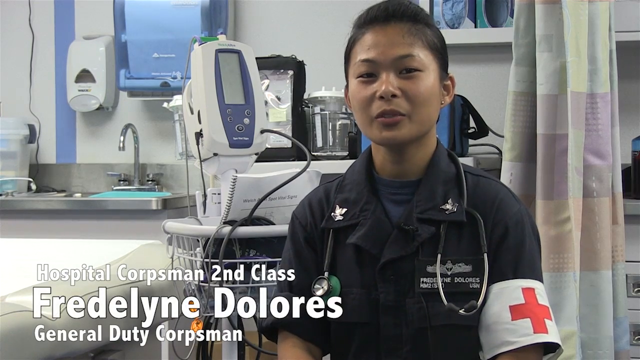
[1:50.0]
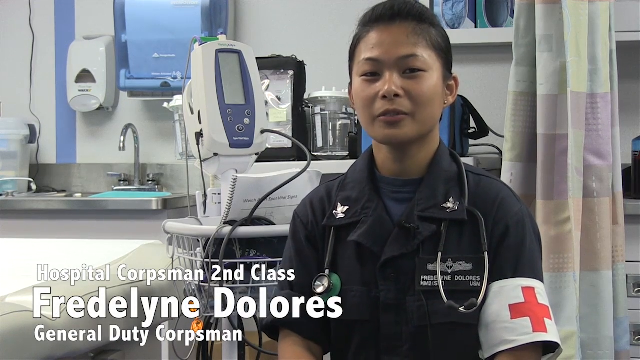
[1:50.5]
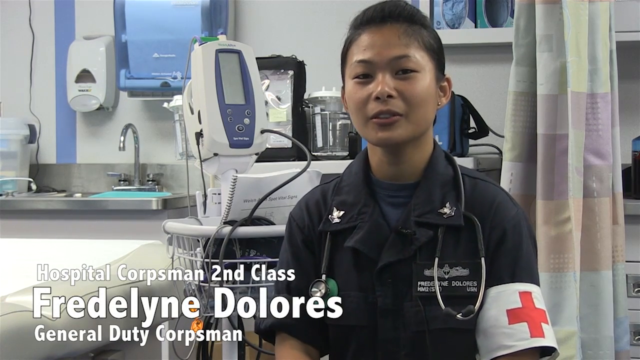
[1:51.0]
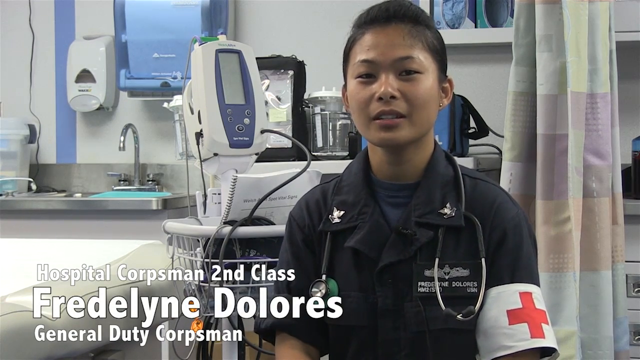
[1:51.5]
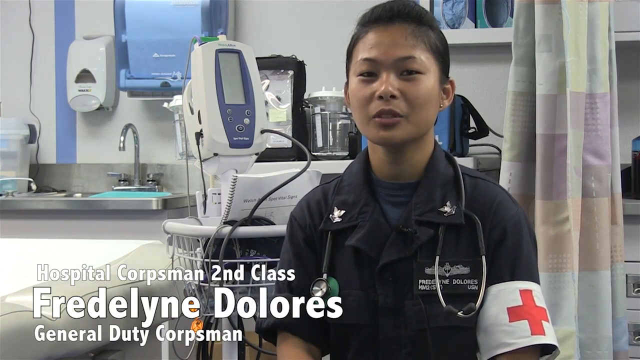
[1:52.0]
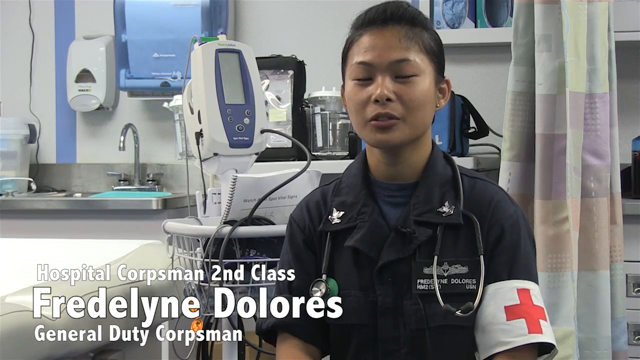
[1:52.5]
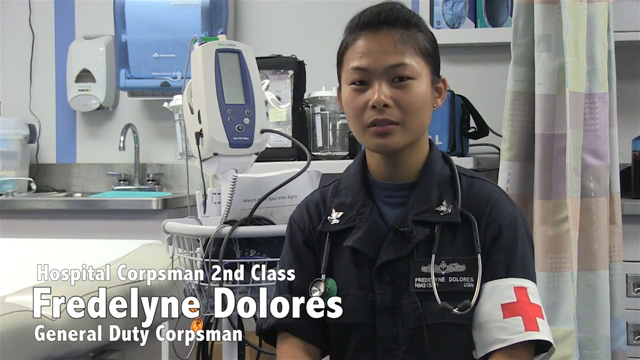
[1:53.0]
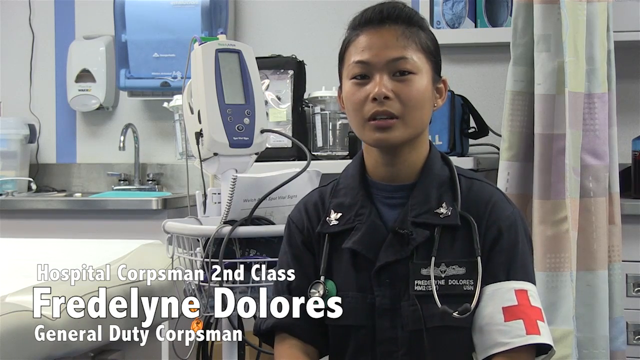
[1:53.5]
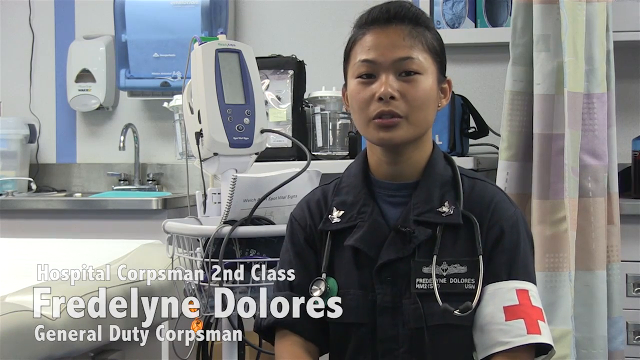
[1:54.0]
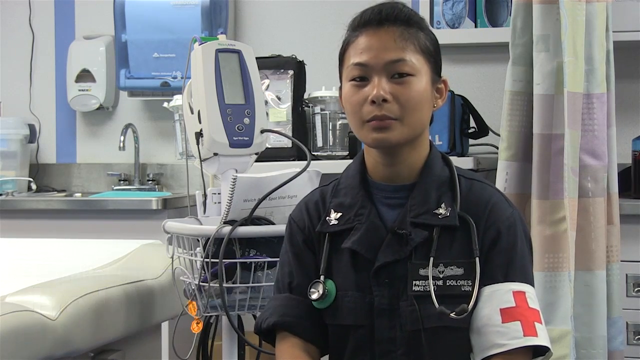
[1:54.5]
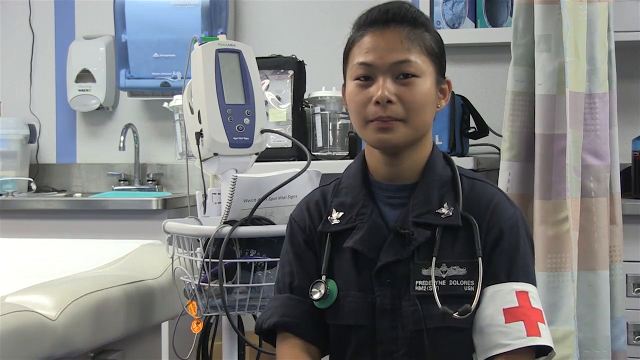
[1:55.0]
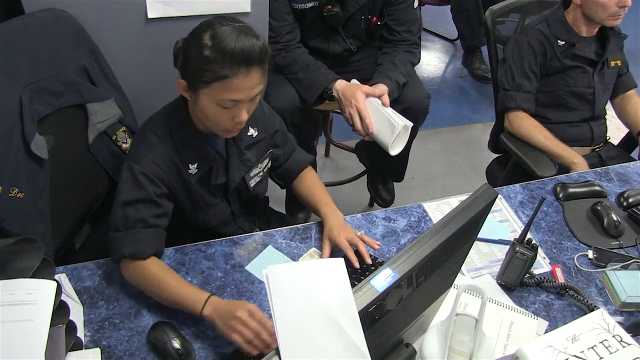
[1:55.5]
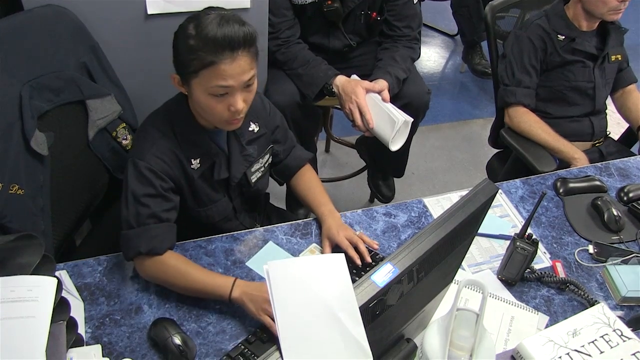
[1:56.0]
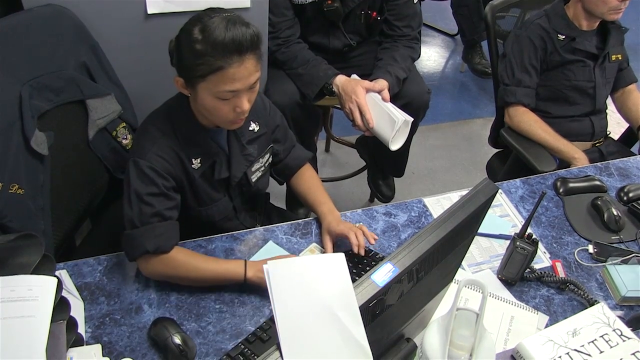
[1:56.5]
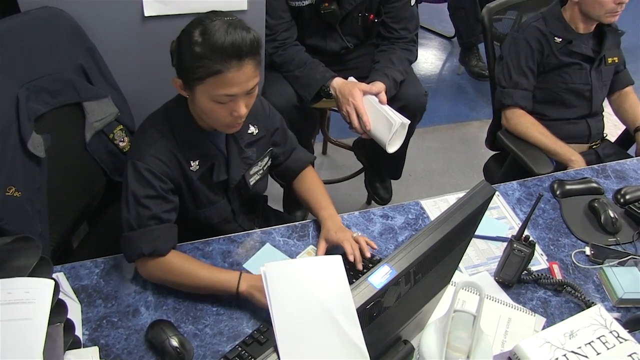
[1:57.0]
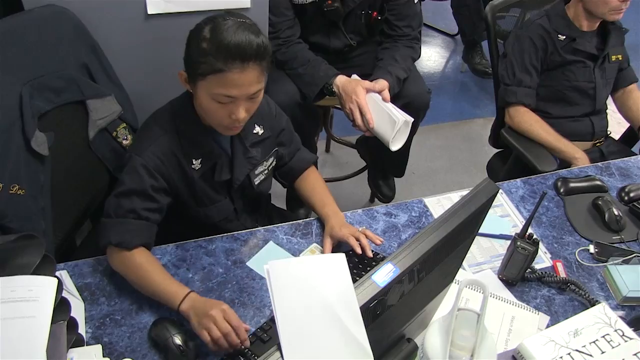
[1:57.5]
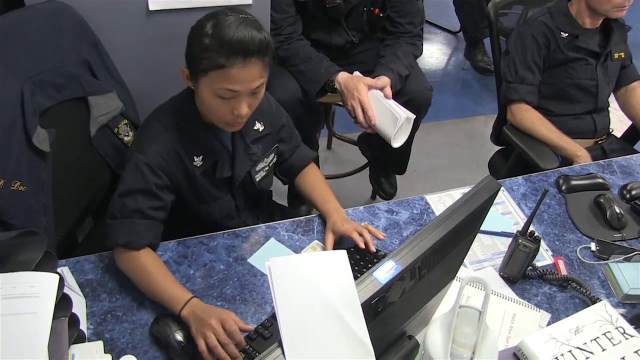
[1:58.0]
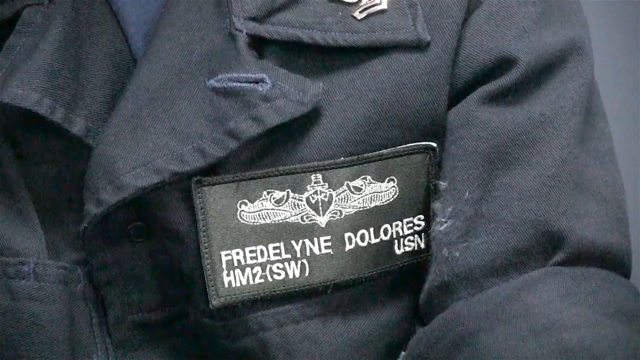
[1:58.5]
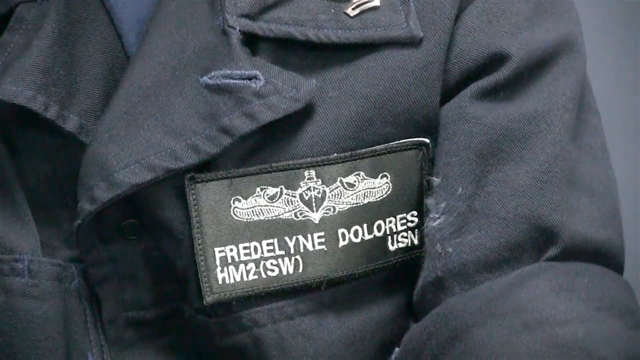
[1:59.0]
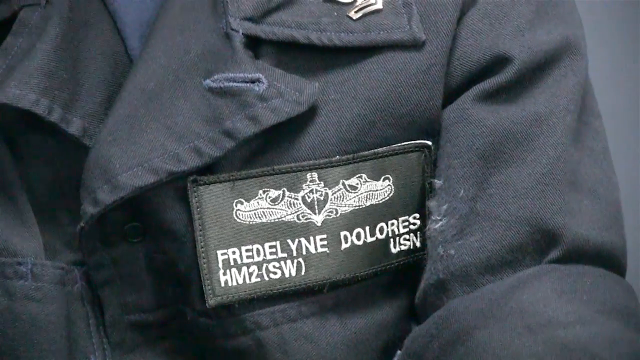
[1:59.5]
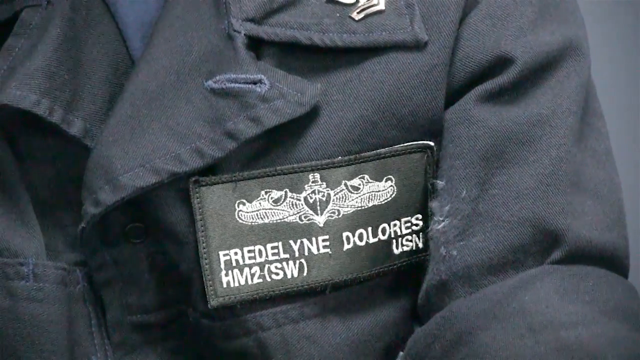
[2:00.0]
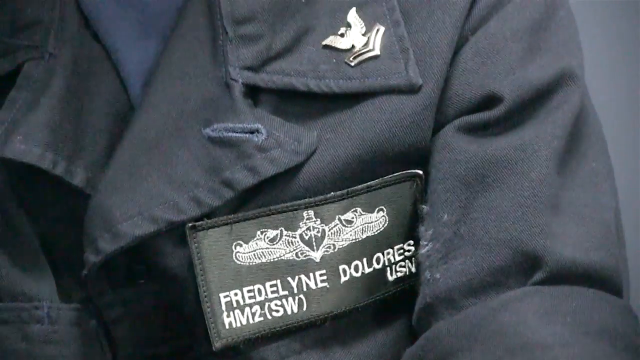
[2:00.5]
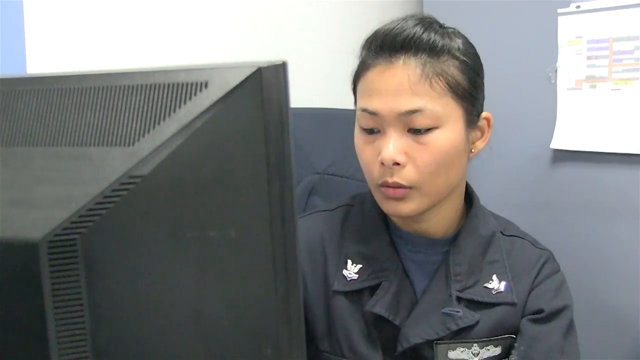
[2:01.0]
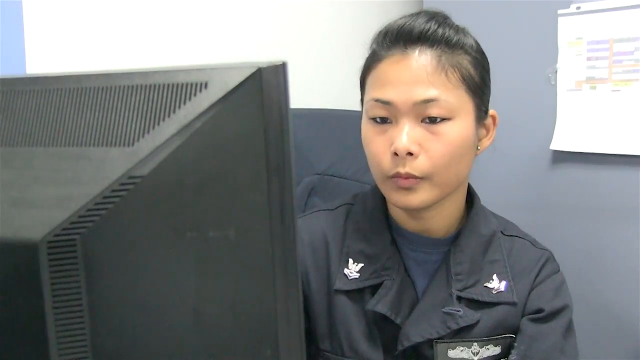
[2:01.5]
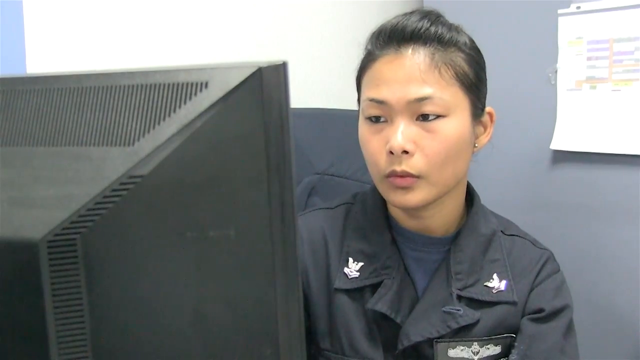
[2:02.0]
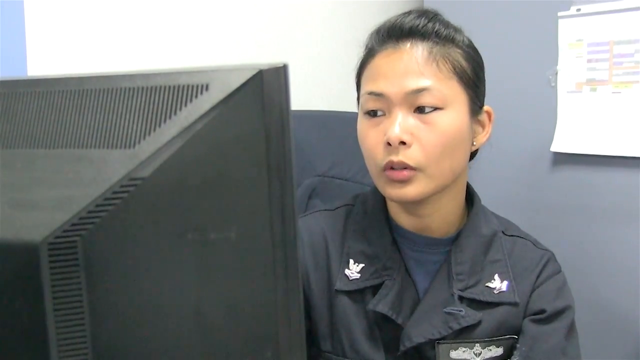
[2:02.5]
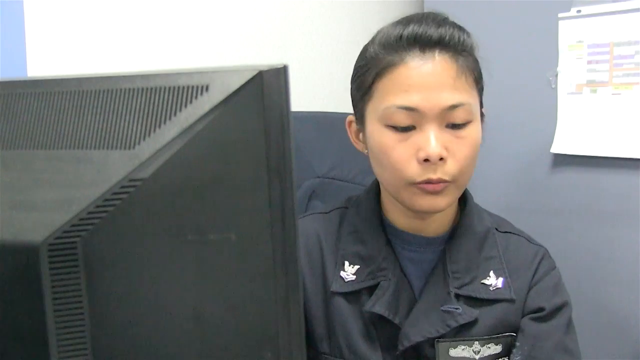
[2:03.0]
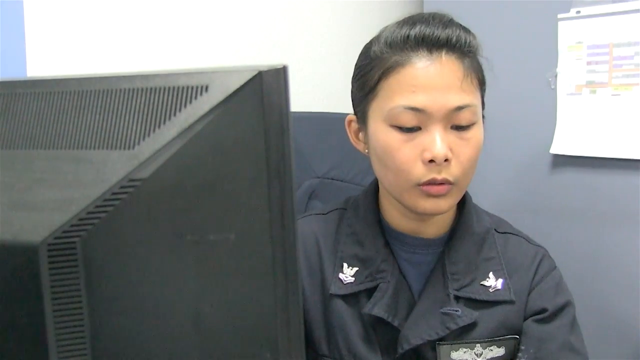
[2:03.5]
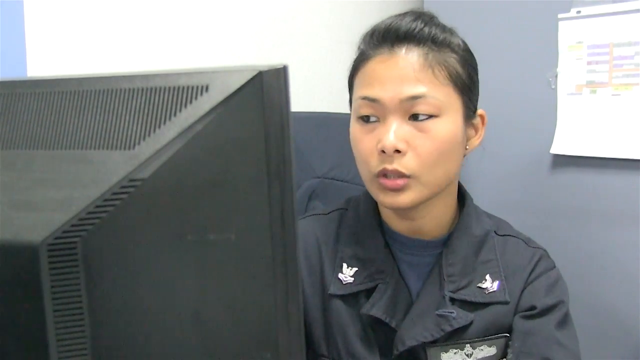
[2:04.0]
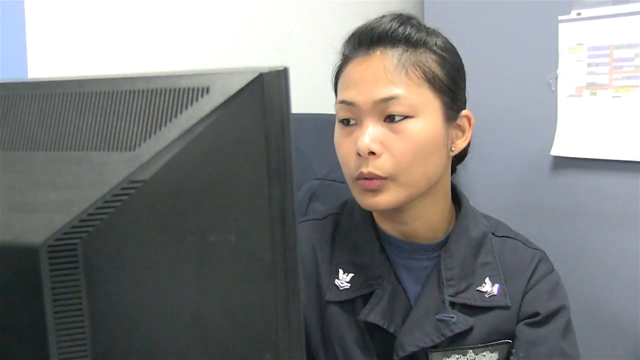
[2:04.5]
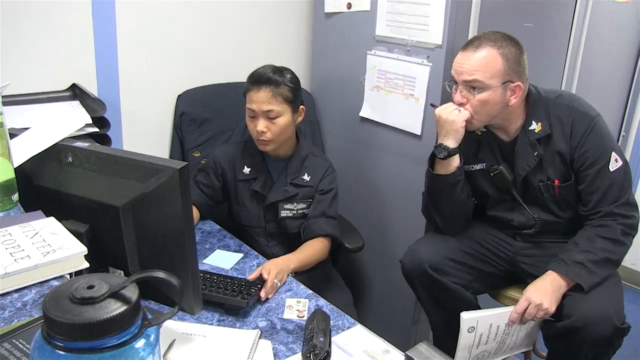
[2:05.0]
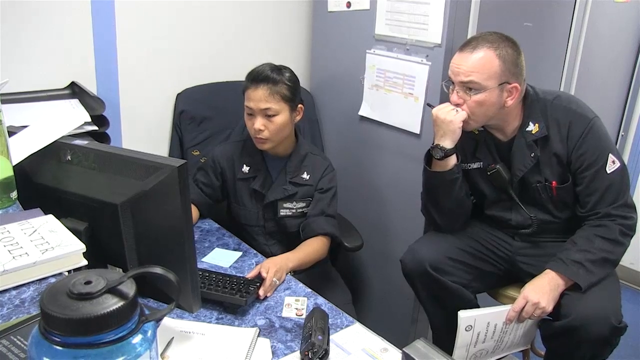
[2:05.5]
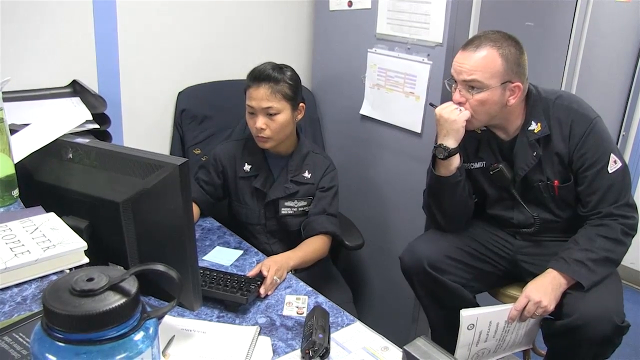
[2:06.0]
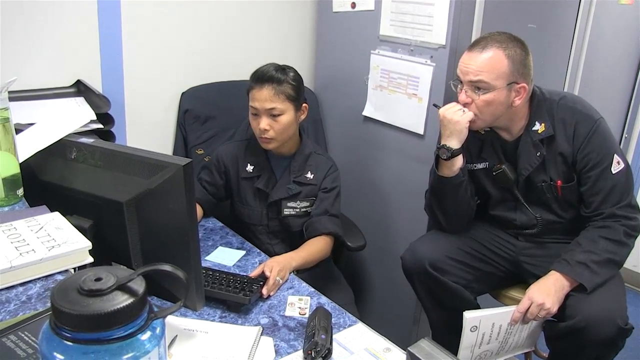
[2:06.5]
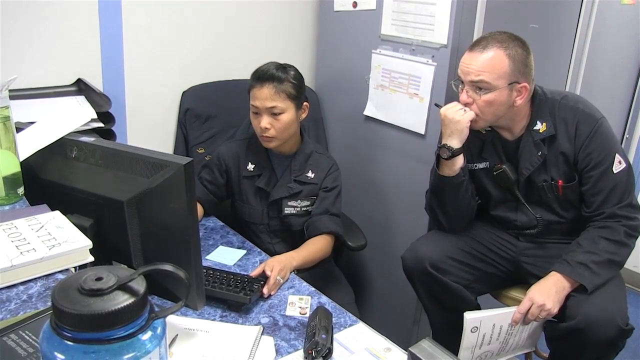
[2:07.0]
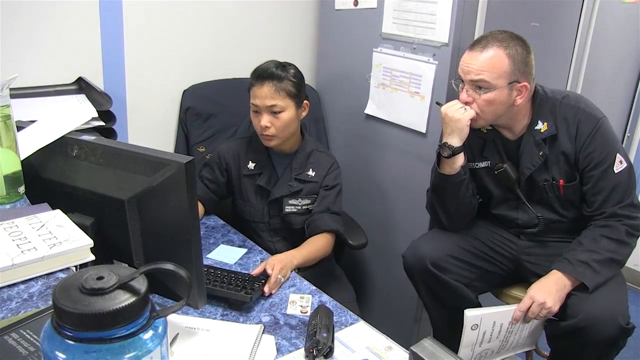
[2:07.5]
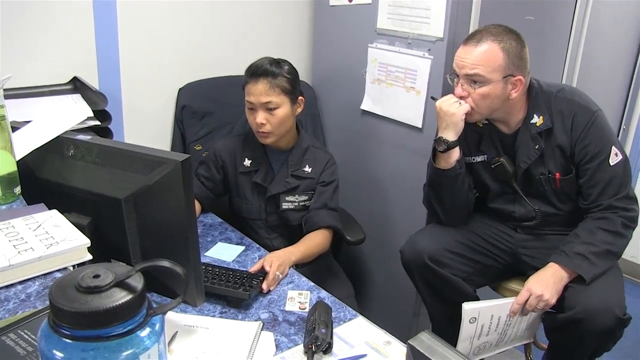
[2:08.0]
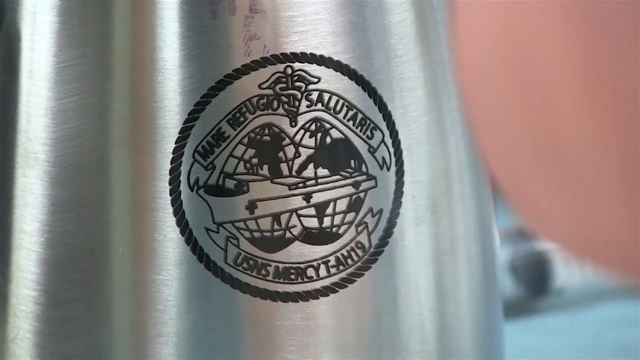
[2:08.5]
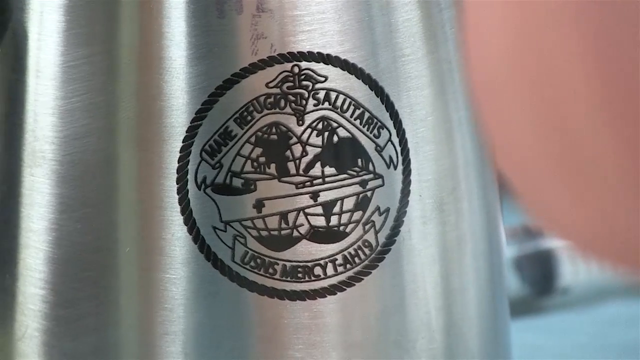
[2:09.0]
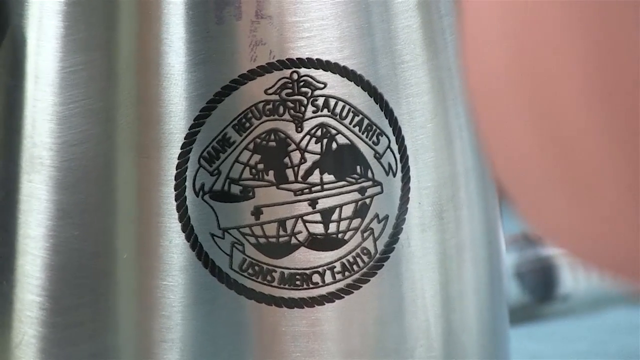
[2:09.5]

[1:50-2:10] Fredelyne is looking at something on a screen that is not visible. Two other people are sitting next to her, and she seems to be looking something up or researching something on the computer. The man next to her looks intently at her computer screen and holds some papers in his hand. A walkie-talkie is on the desk next to her computer. At the beginning she is wearing a kind of medical Red Cross cuff on her arm. They don't seem to be talking to each other.